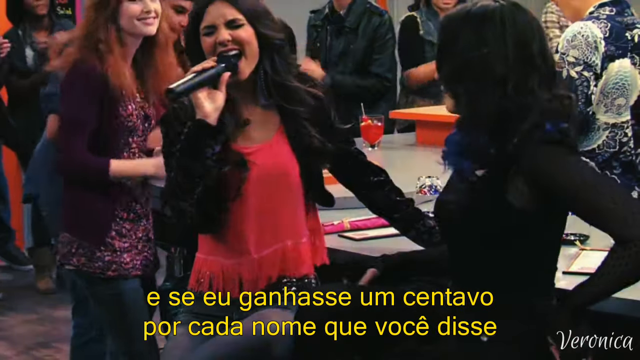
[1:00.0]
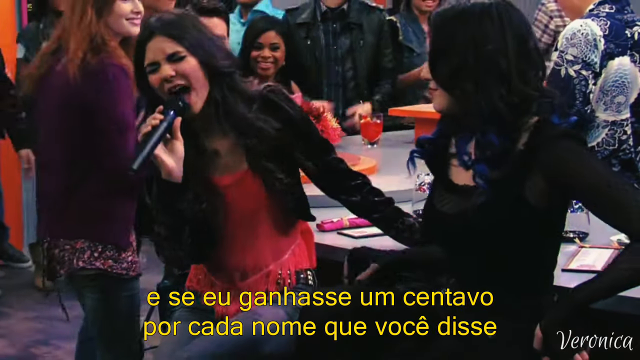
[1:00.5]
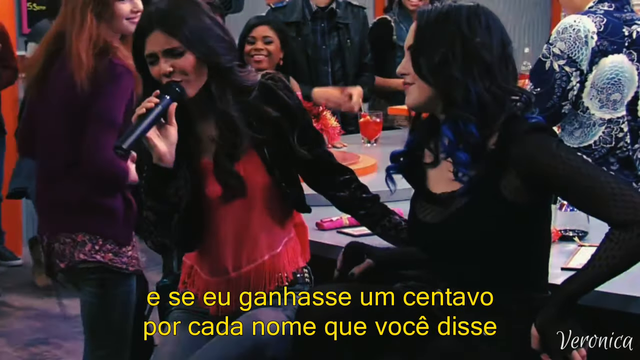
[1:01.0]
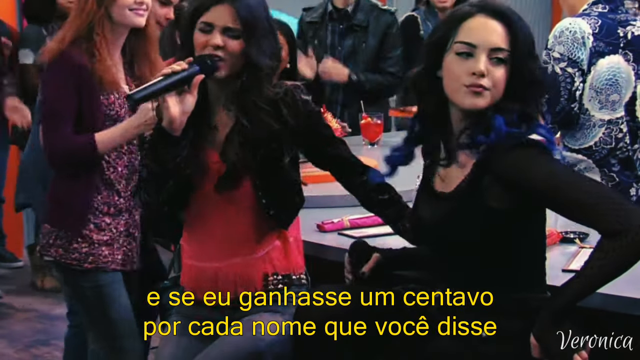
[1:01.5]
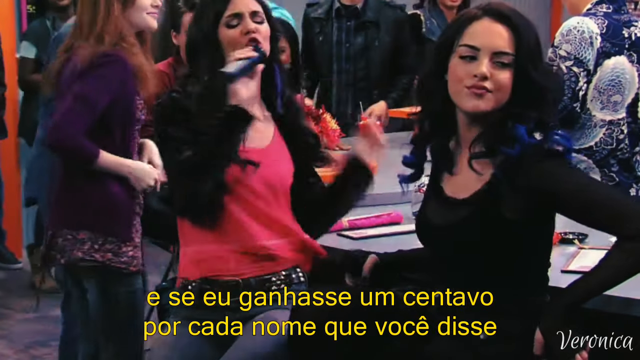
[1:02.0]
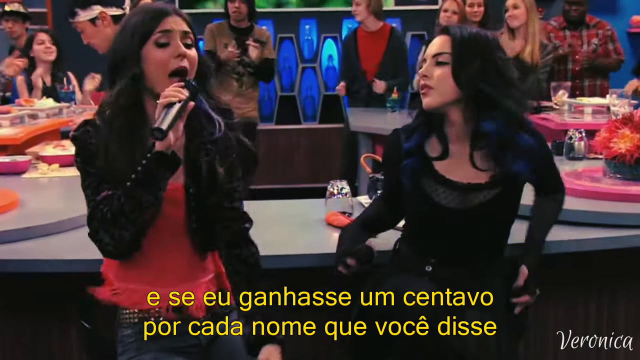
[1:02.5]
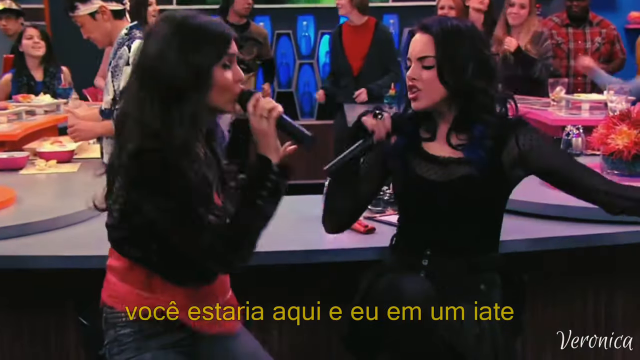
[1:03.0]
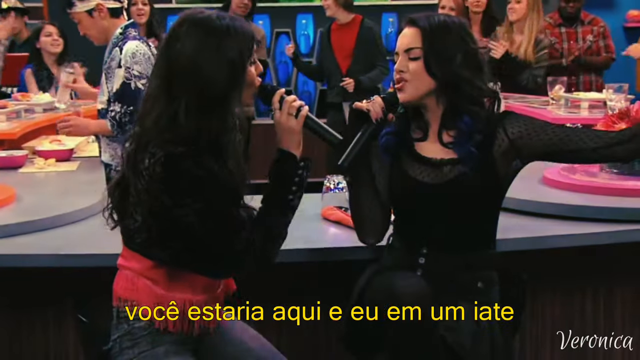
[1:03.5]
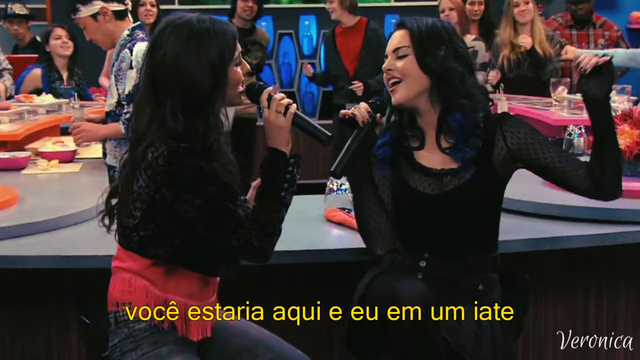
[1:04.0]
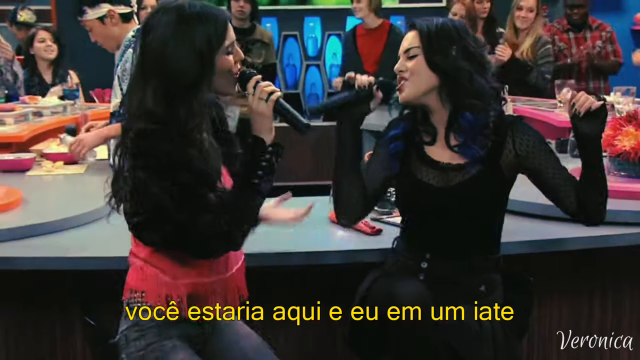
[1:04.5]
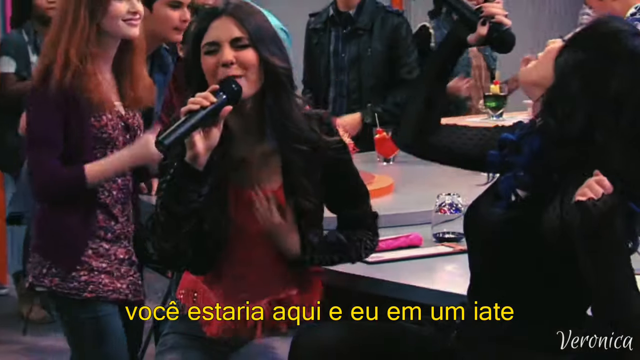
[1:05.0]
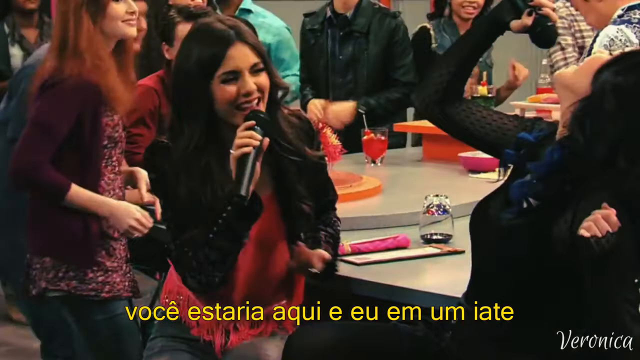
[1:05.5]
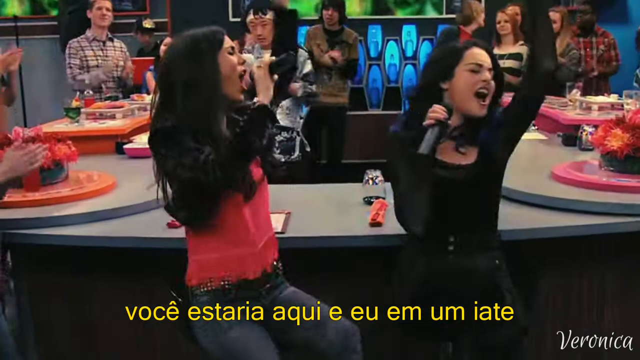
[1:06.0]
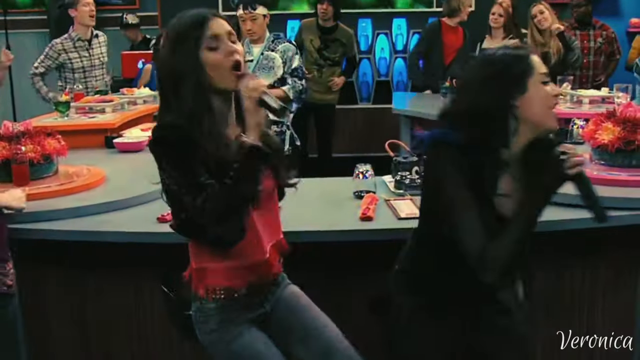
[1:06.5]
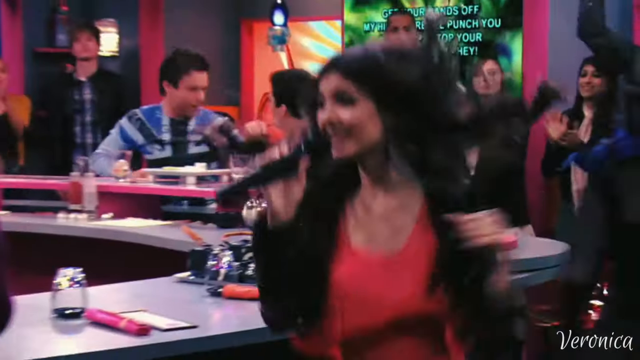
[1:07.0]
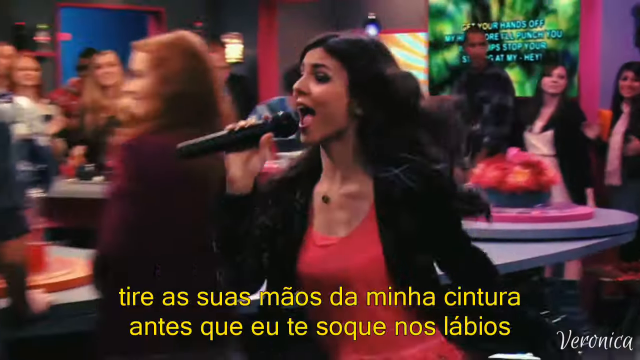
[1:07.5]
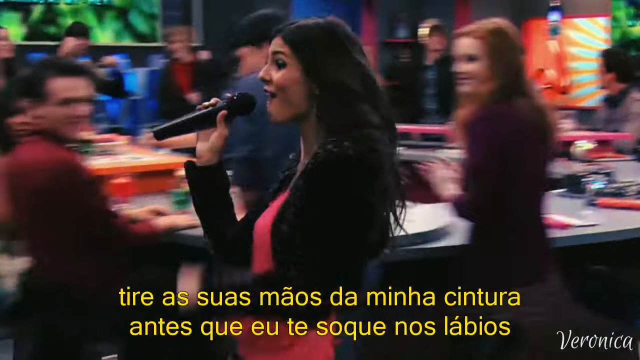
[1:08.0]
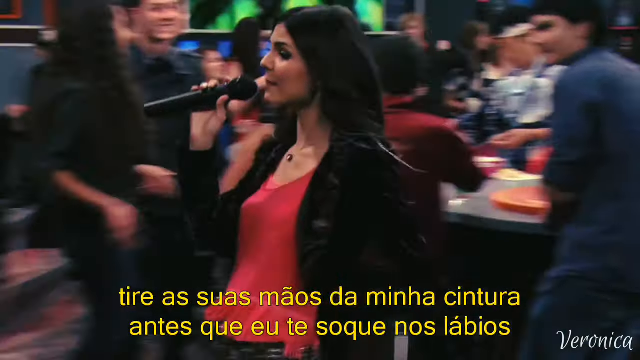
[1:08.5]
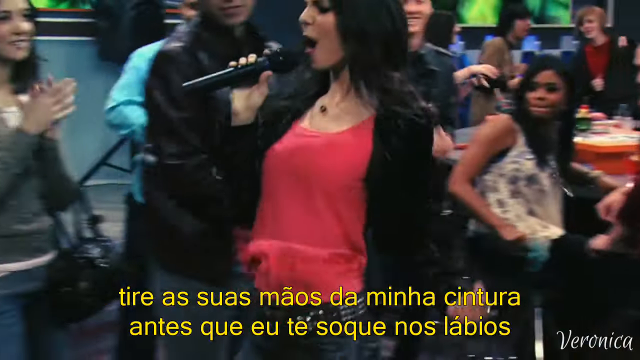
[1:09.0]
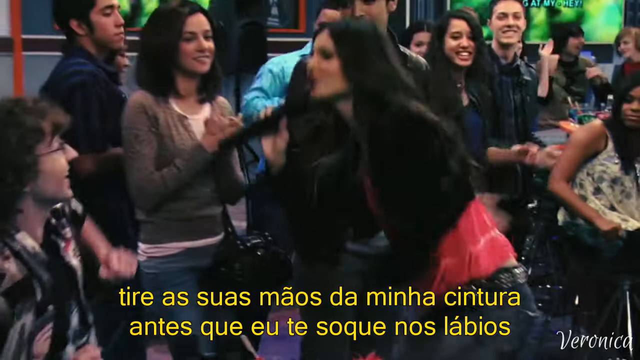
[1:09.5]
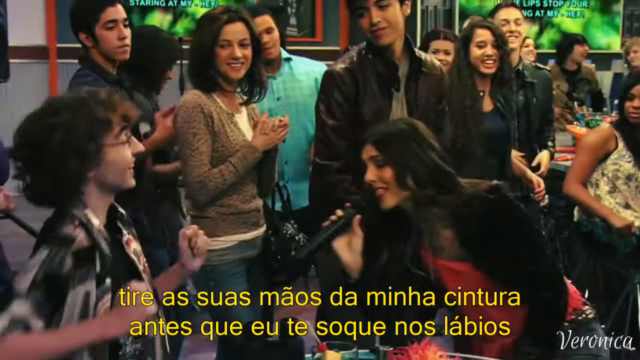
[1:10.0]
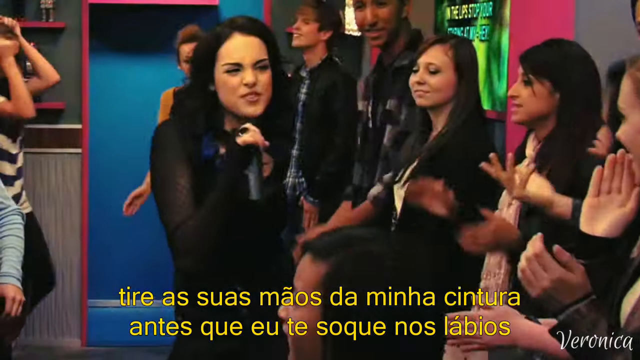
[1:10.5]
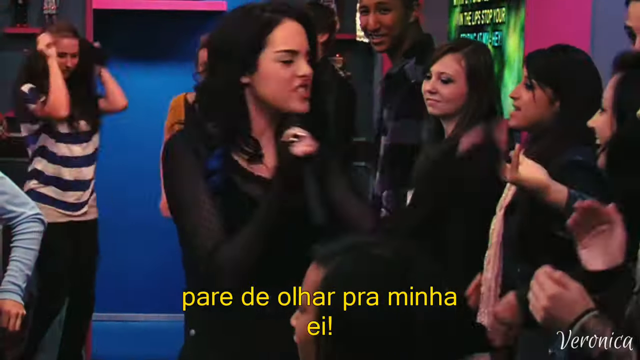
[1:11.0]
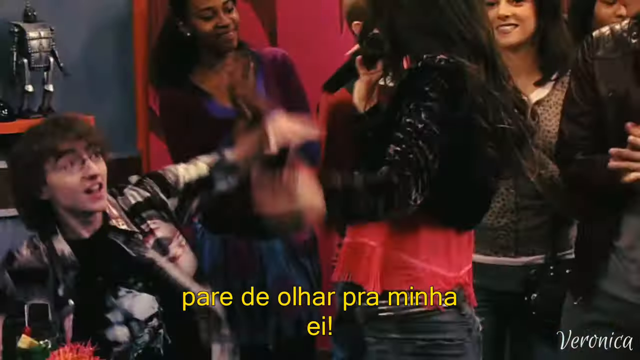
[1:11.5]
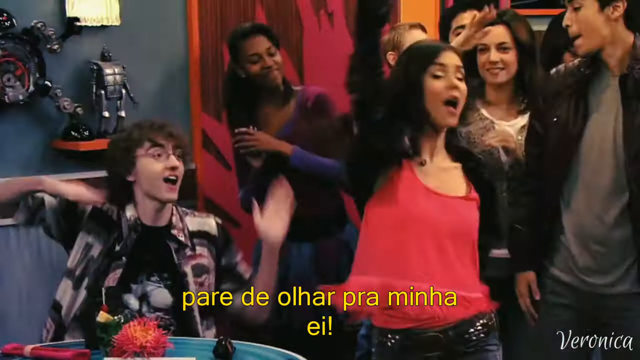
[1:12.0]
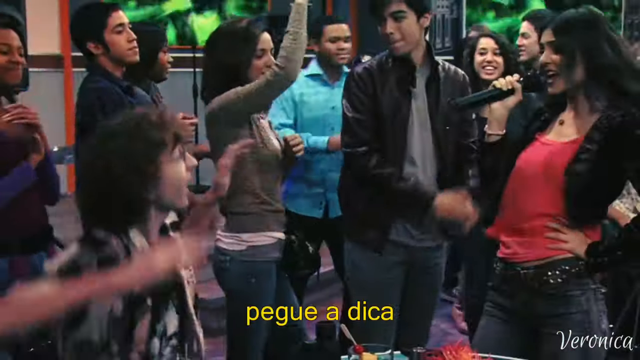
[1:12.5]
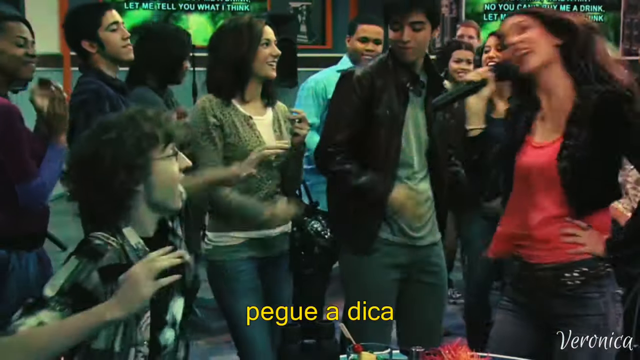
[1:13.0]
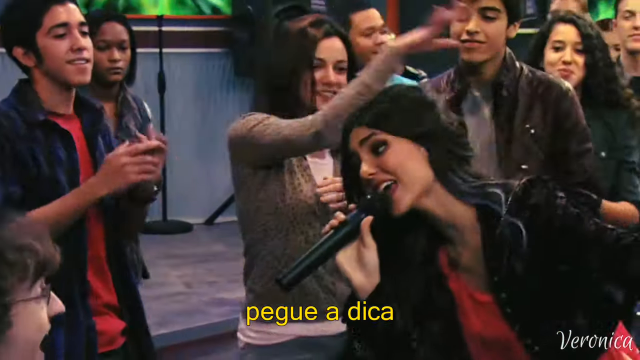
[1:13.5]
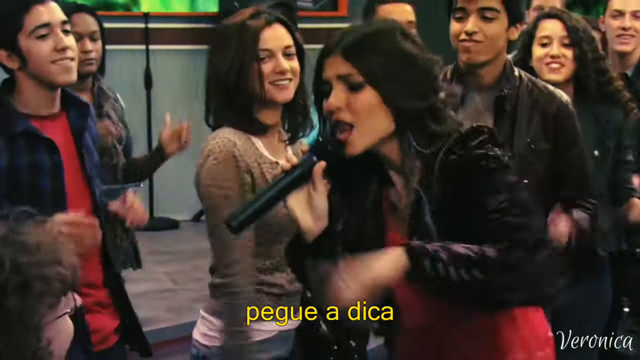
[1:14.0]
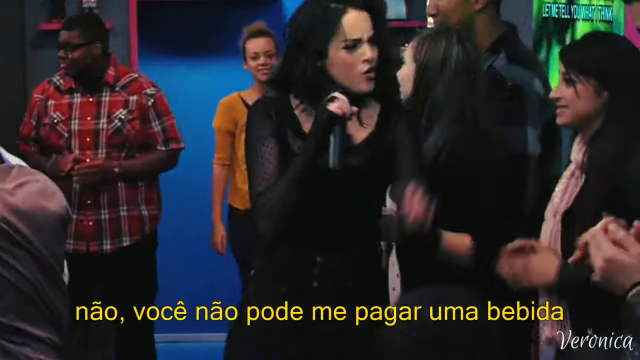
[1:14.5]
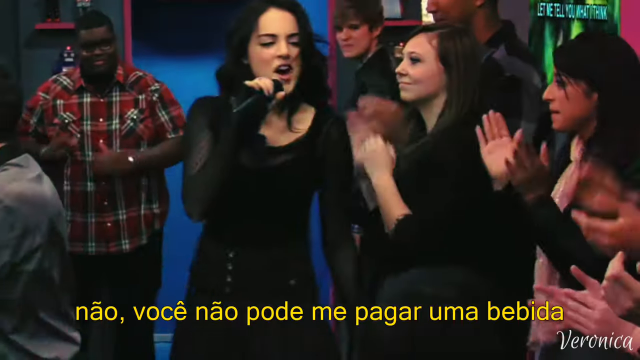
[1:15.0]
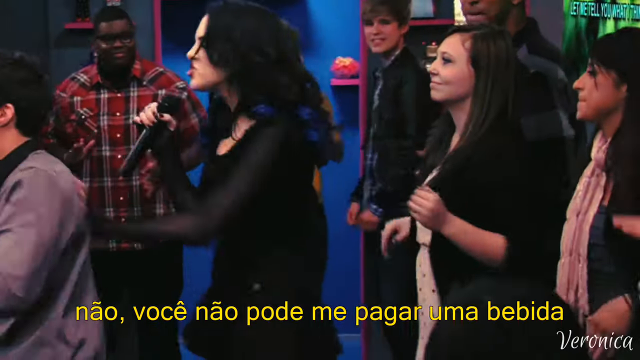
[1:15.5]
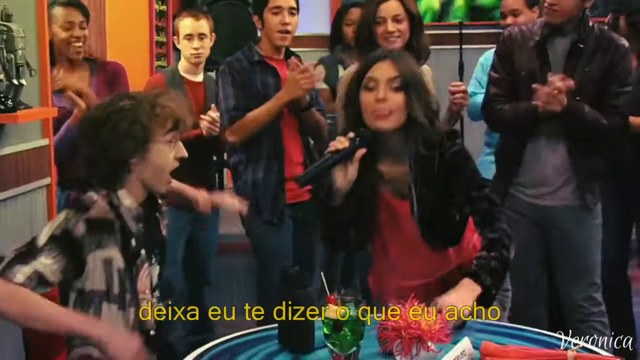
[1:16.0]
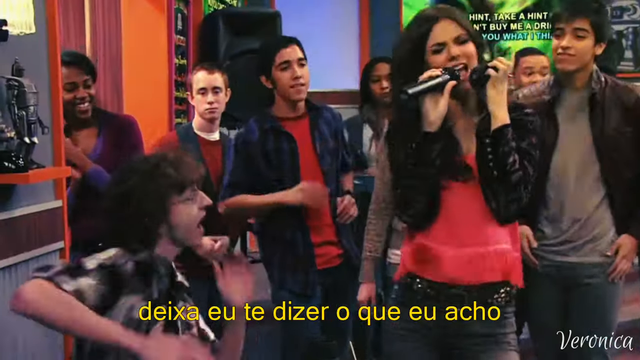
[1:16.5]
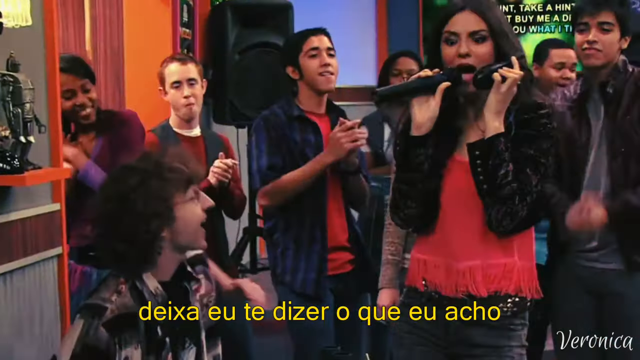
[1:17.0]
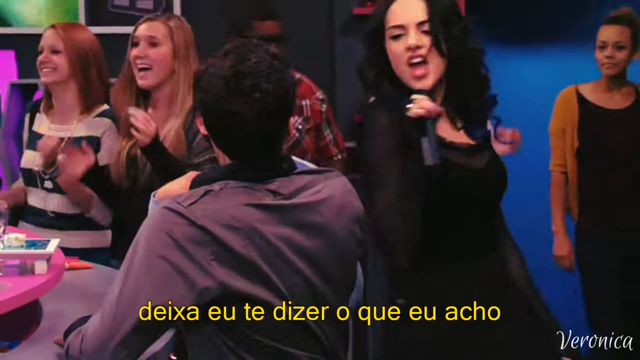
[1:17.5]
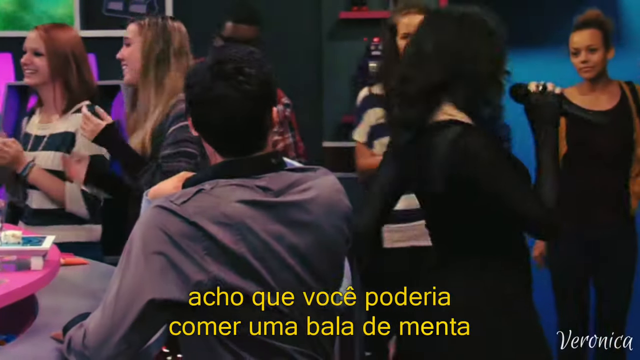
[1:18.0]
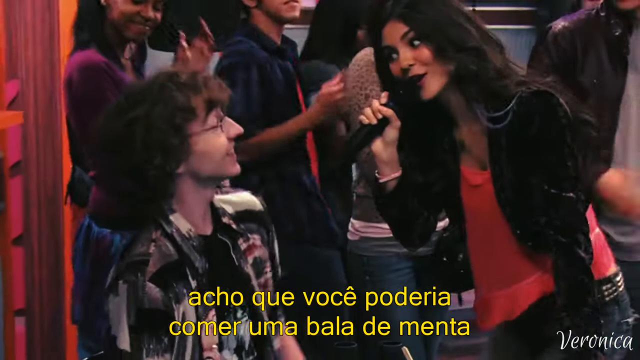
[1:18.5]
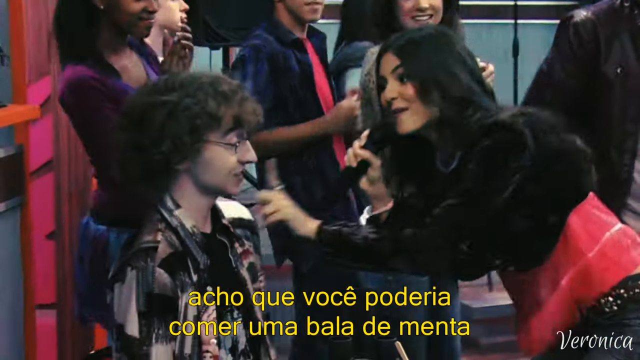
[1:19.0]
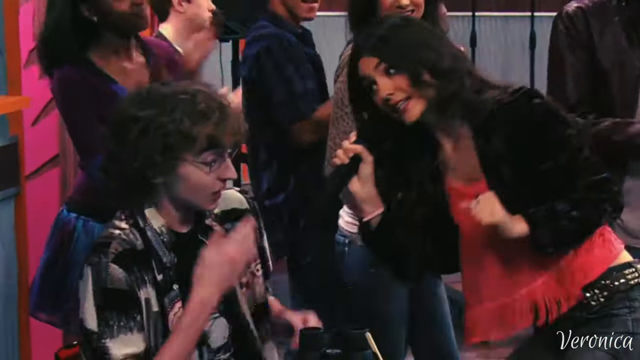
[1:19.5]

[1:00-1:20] The two women sit at one of the counters of the karaoke place, singing back and forth and looking at each other with their microphones. They then break off in opposite directions, one to the left of the restaurant area and one to the right, still singing with microphones in hand, and each joins a different group of people. The woman in the red top ends up with what appears to be a nerdy white guy with shaggy hair, glasses, a t-shirt and an open plaid shirt, singing to him while he dances. The woman in the all-black top appears to go toward a group with a few more women, dancing to them, and then suddenly looks back toward what appears to be a black man with an afro and an old leather denim vest like something from the 70s. The whole time they sing, sometimes to each other and sometimes to the crowd, while people of various ages and groups clap along. The man with the afro appears to be eating and stops suddenly as the woman in all black makes her way over to him.